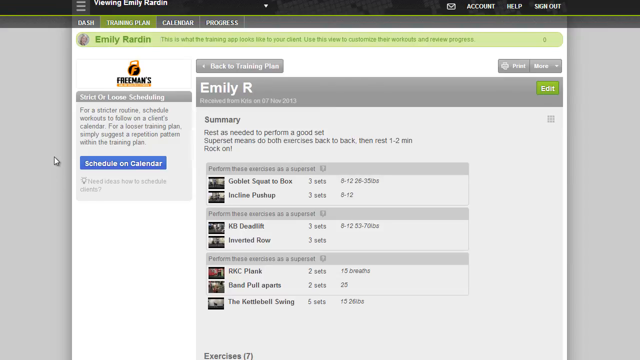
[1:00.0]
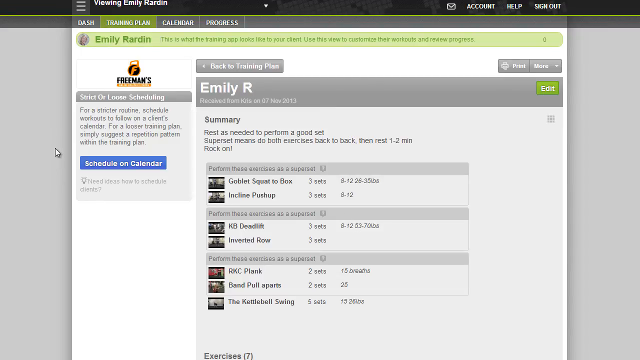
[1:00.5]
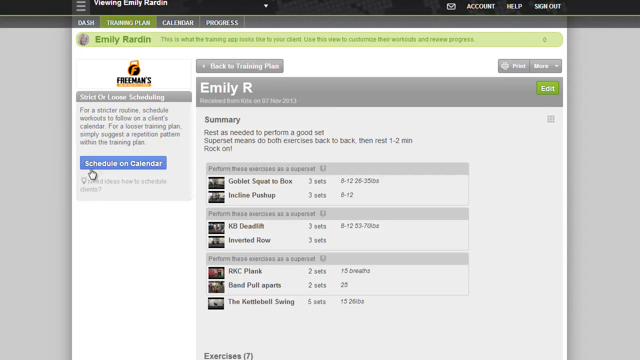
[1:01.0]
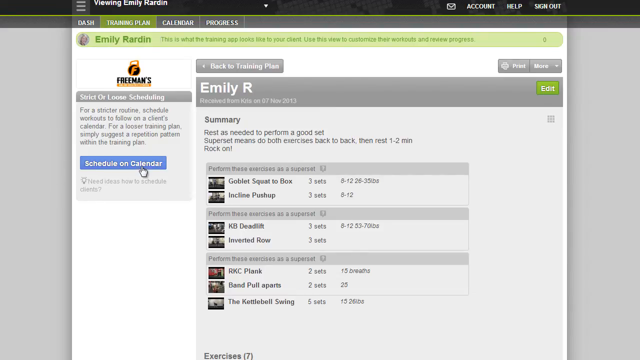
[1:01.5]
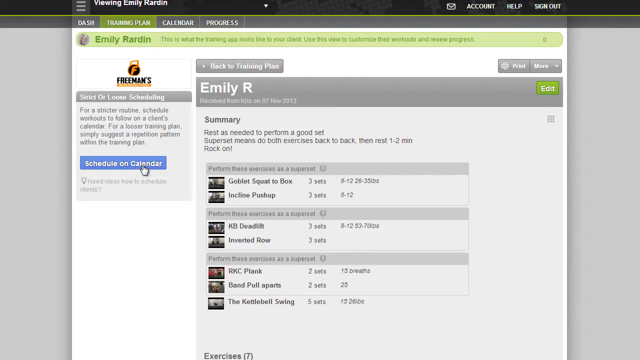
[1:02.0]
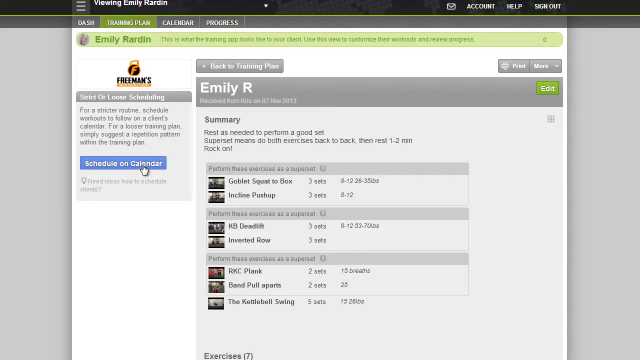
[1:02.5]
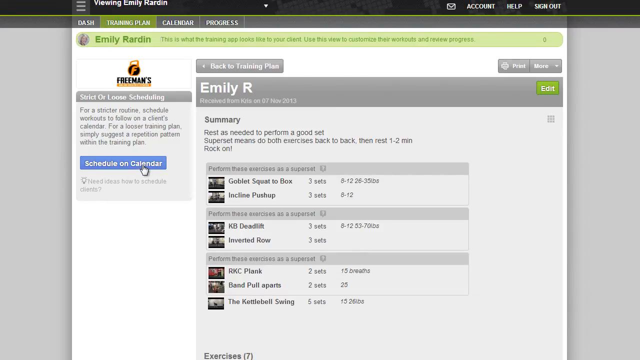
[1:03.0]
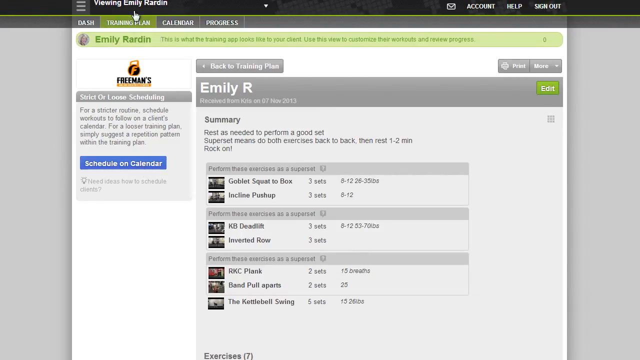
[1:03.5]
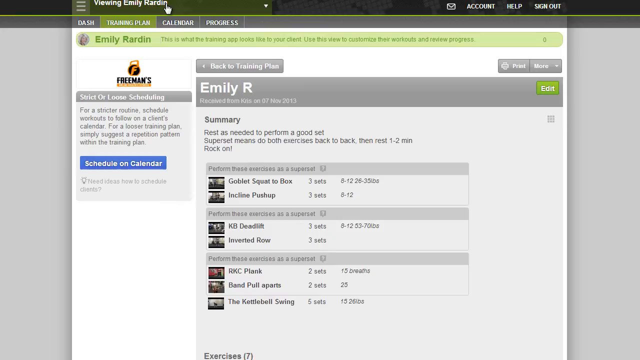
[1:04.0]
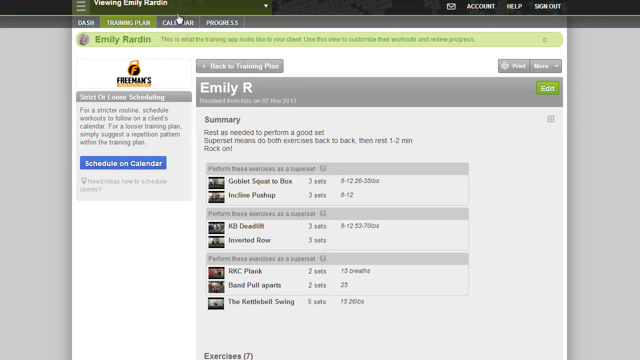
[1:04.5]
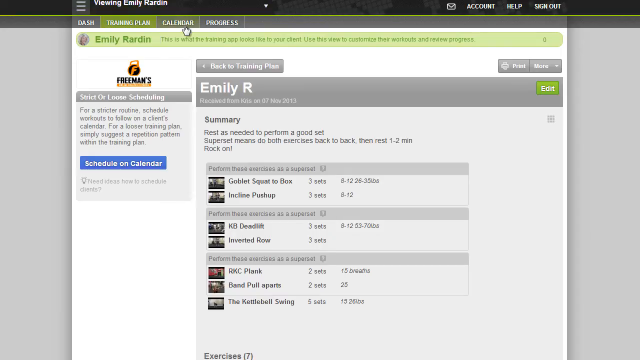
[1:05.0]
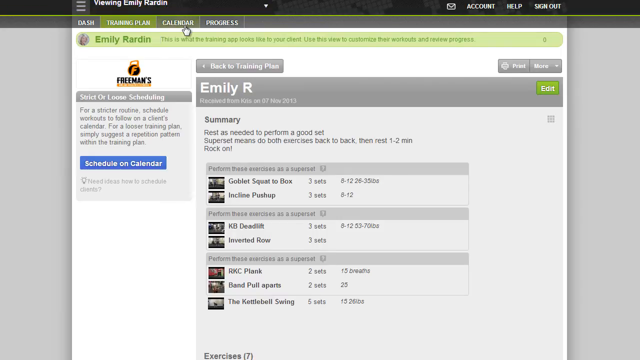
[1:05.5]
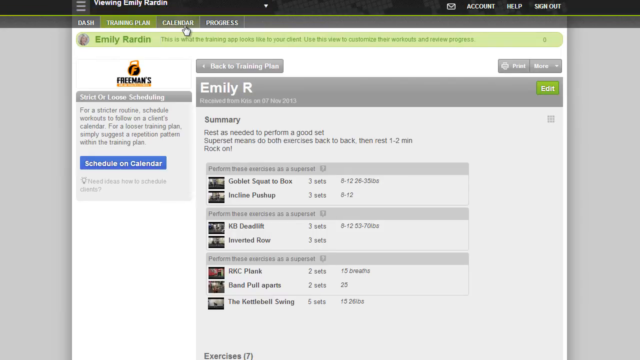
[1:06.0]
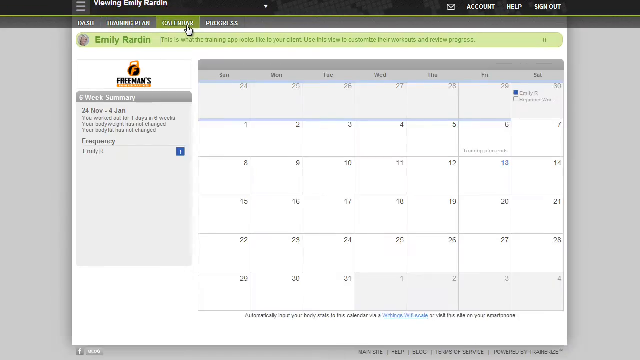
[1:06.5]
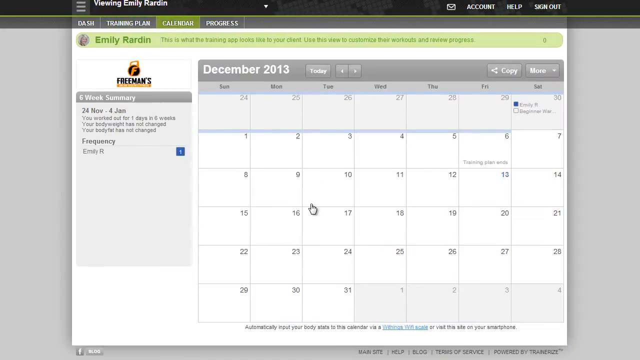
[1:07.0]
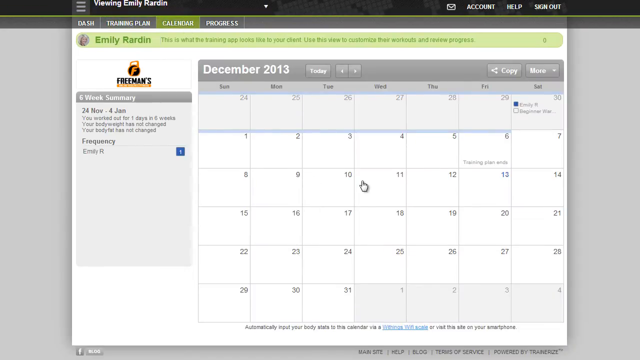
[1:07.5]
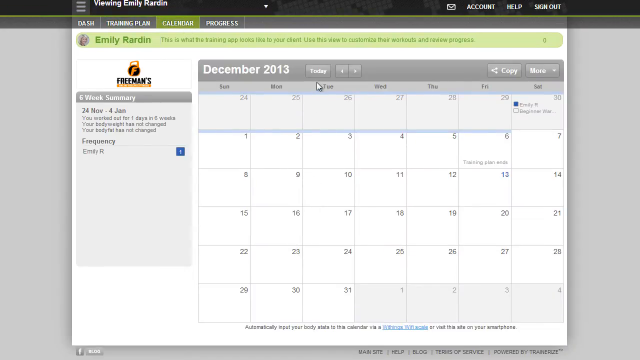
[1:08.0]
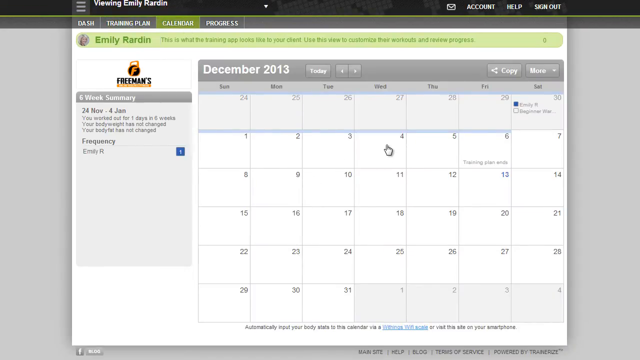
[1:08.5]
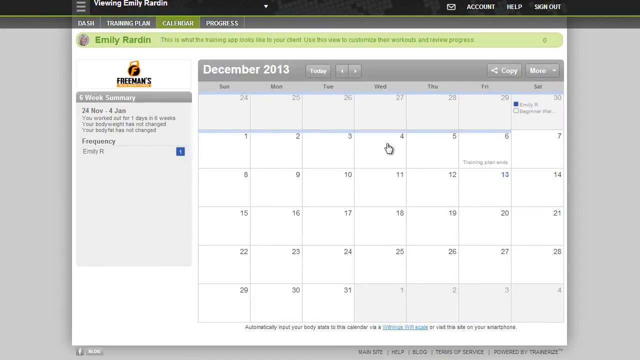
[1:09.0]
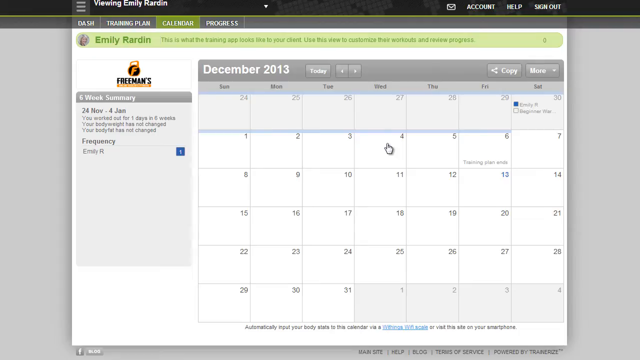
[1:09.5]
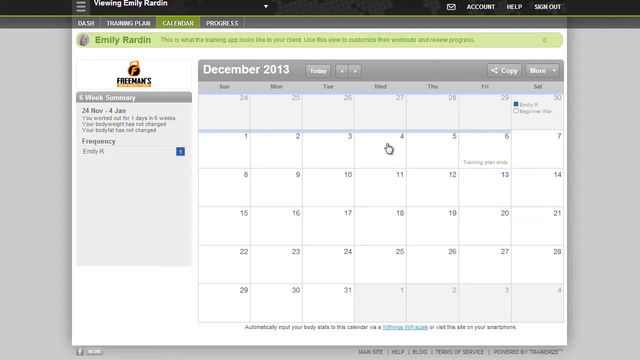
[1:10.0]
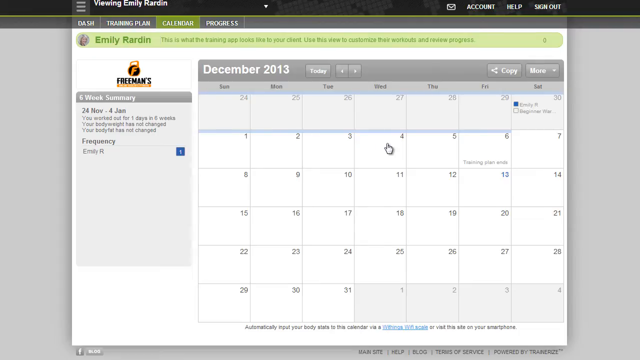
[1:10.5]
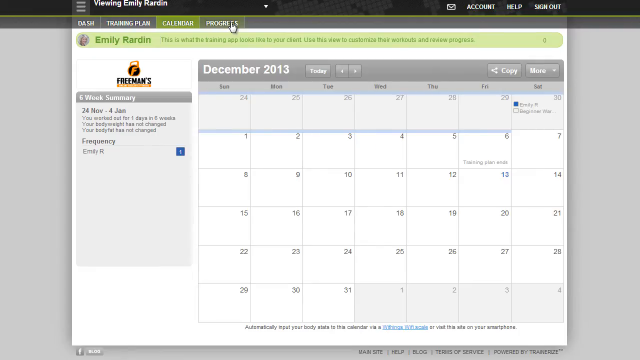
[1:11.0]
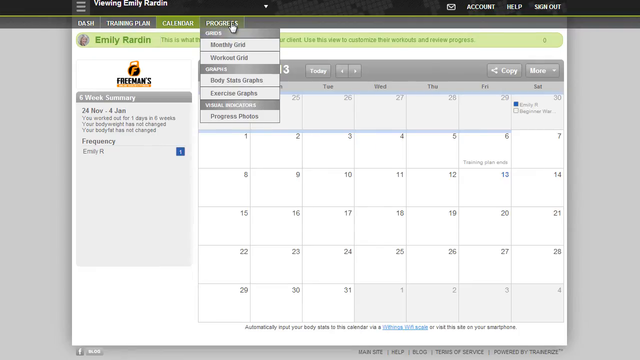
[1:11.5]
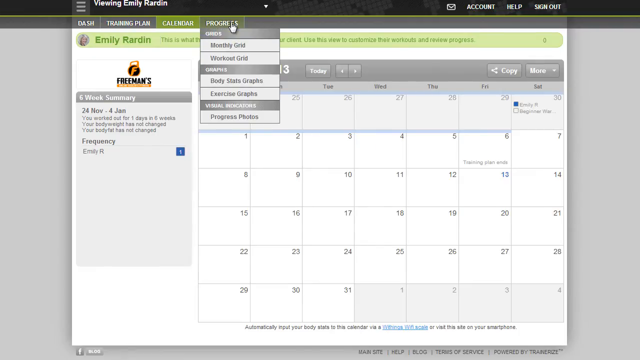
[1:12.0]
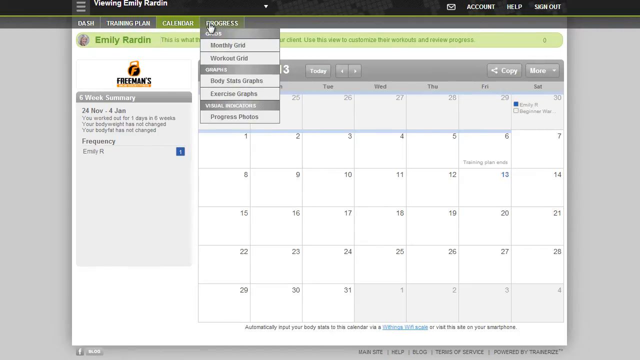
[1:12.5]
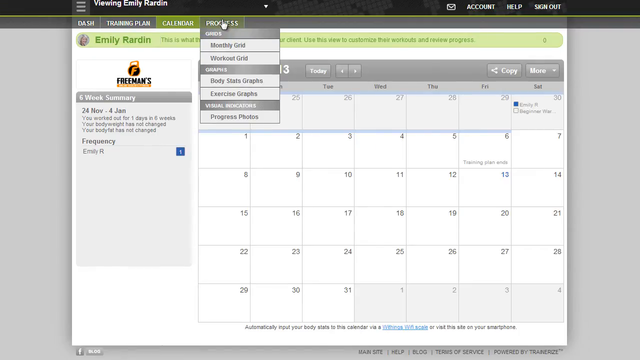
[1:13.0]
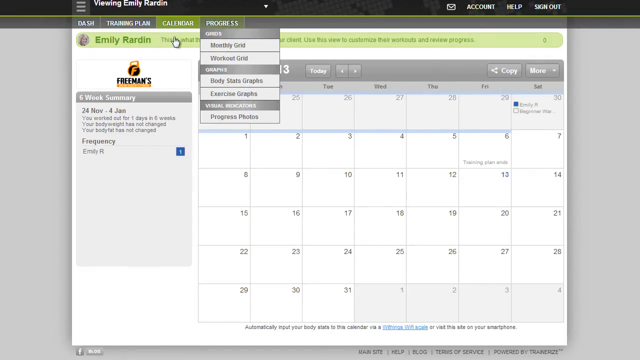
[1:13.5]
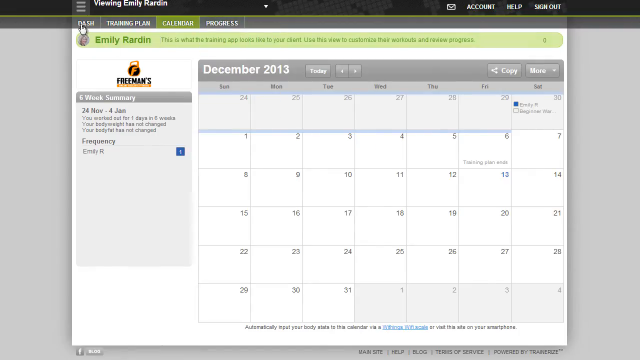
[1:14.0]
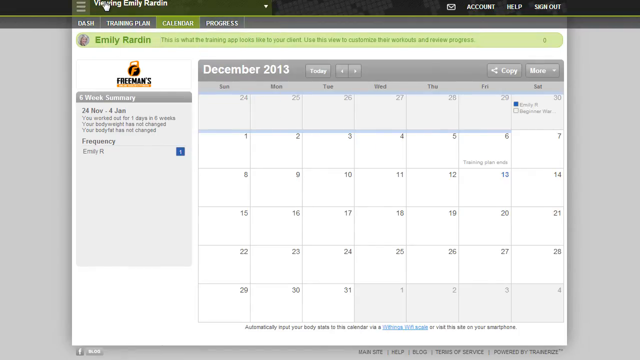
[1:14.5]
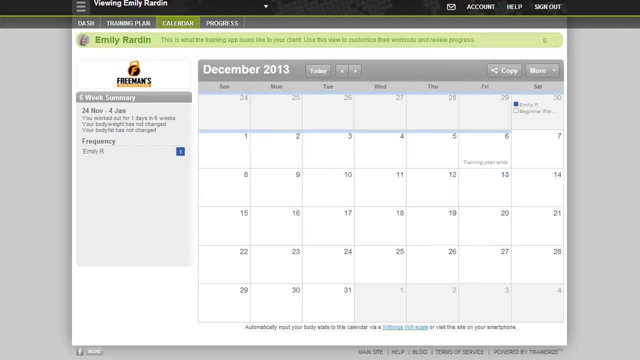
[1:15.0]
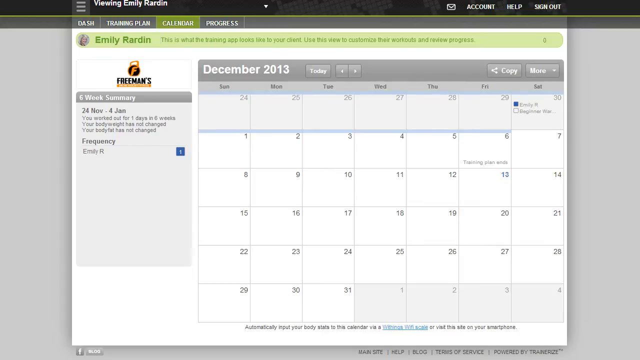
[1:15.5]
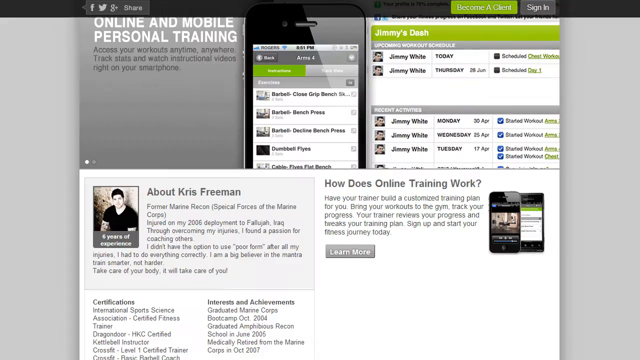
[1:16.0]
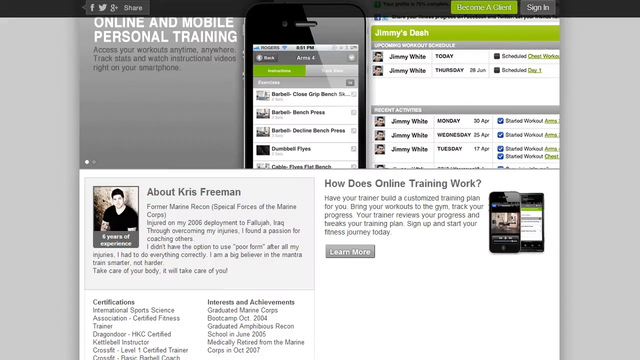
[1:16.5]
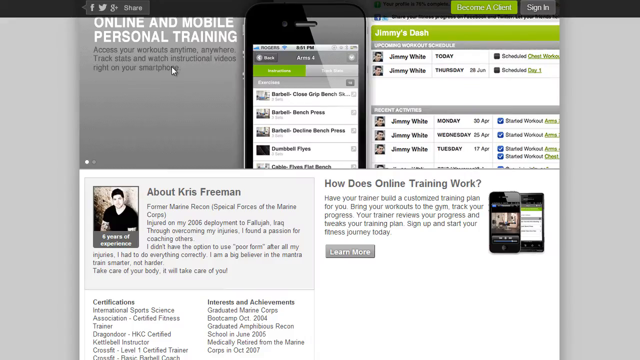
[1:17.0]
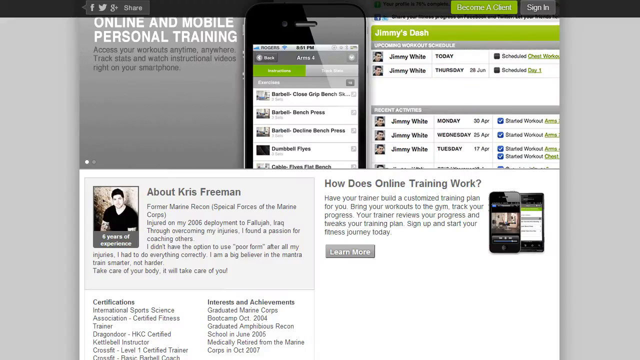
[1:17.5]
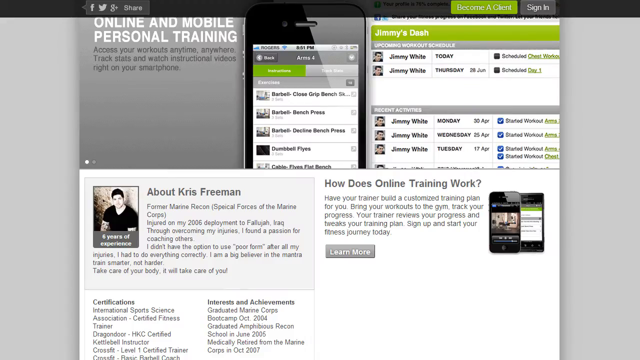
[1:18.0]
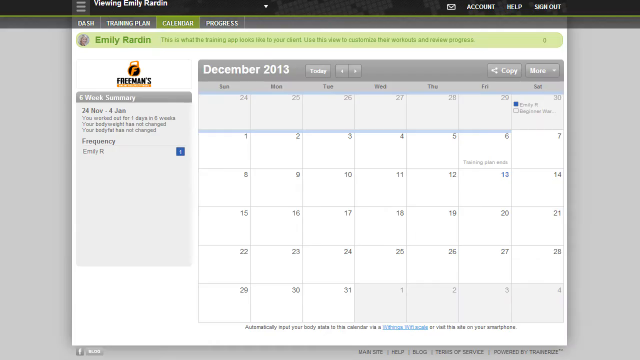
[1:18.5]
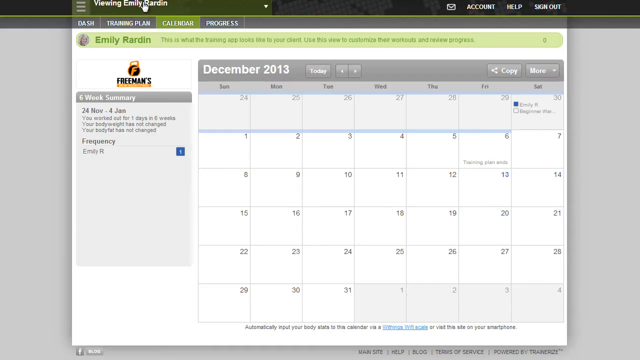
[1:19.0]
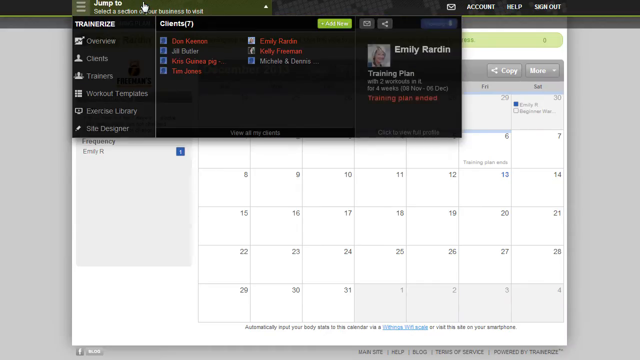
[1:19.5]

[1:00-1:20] On a computer screen, a small pointer moves around, goes up and clicks a tab marked "calendar." A calendar appears with "December 2013" written in white in a gray stripe at its top, and the days of December beneath. The pointer then moves to the neighboring tab, "progress," and clicks it. Another screen appears: its top left-hand corner reads "online and mobile personal training," to the right is a picture of a cell phone, and further right it reads "Jimmy's dash," with "Jimmy White today" and "Jimmy White Thursday" beneath, apparently listing the days this person meets Jimmy White for exercise.